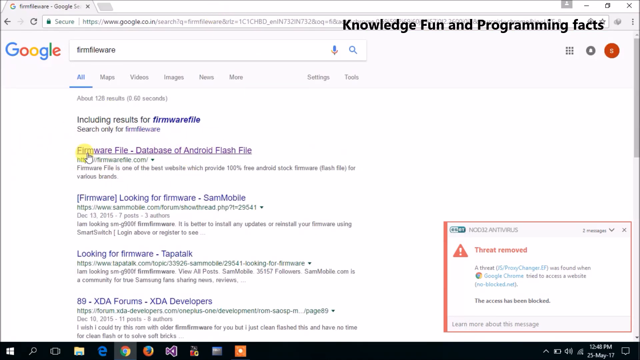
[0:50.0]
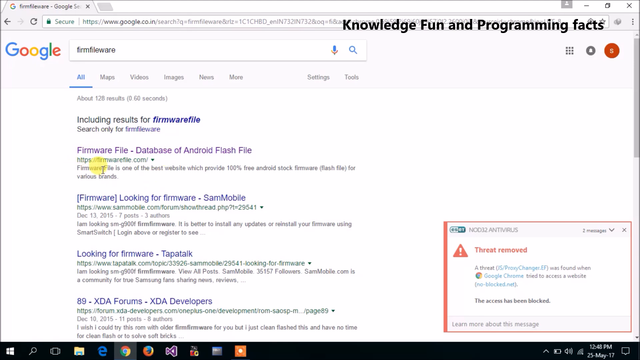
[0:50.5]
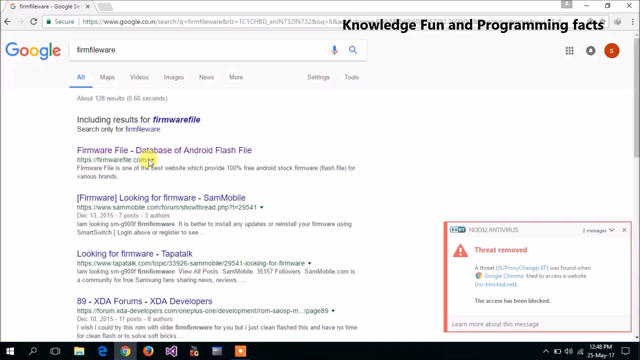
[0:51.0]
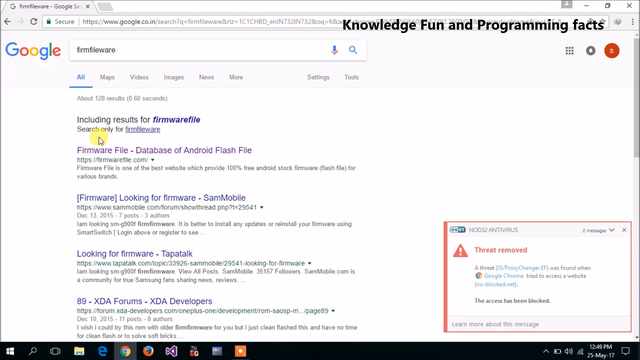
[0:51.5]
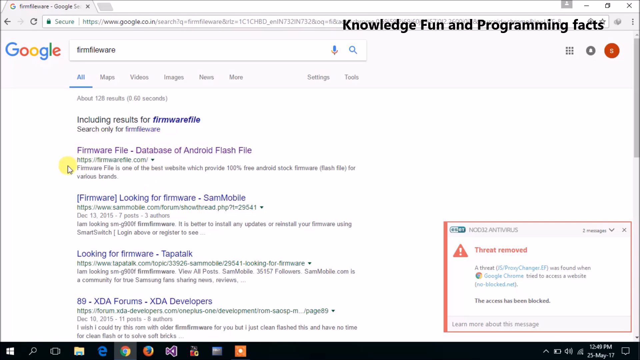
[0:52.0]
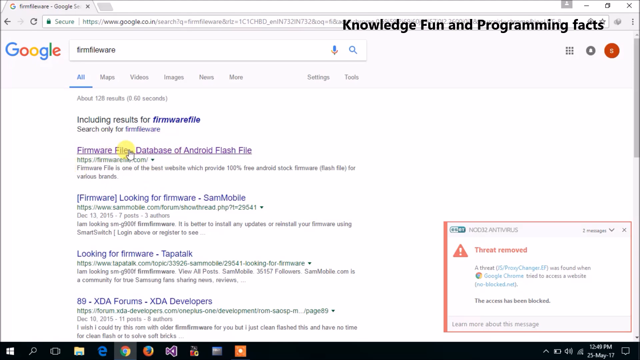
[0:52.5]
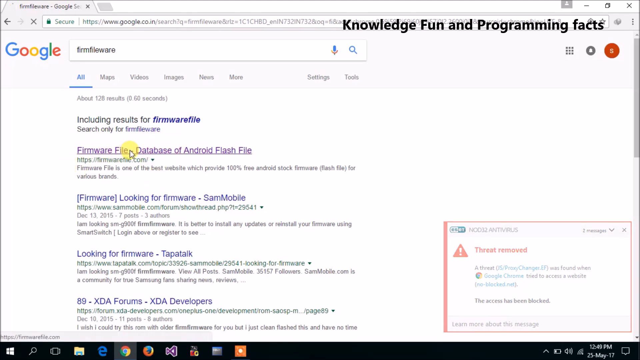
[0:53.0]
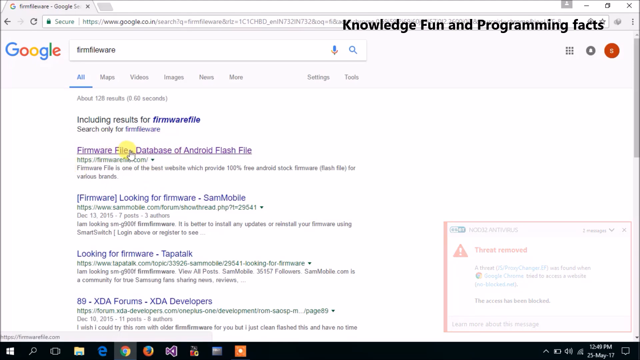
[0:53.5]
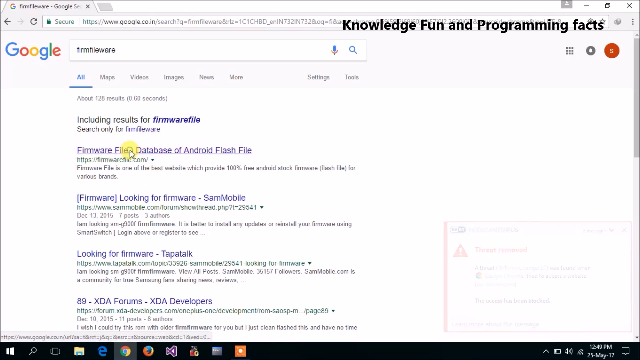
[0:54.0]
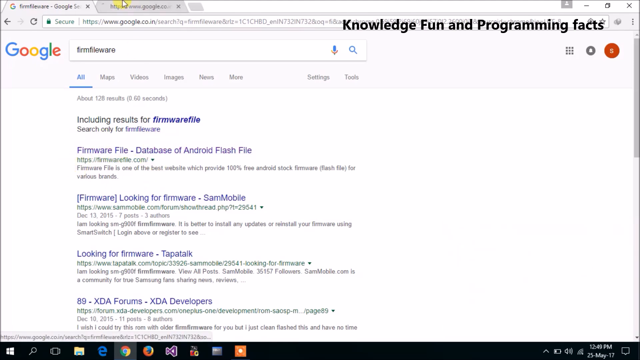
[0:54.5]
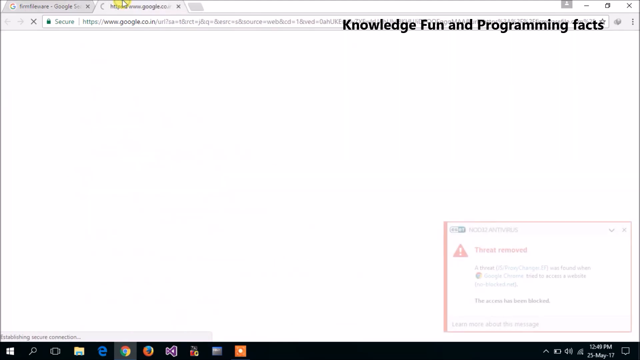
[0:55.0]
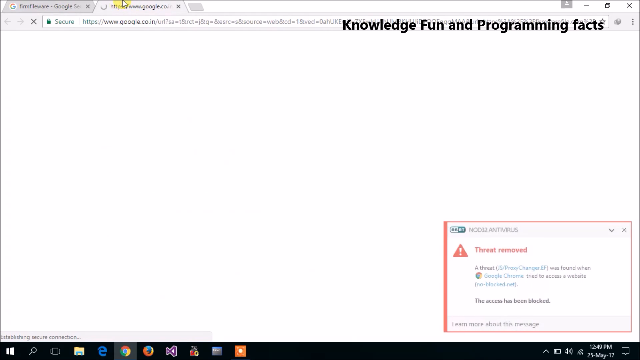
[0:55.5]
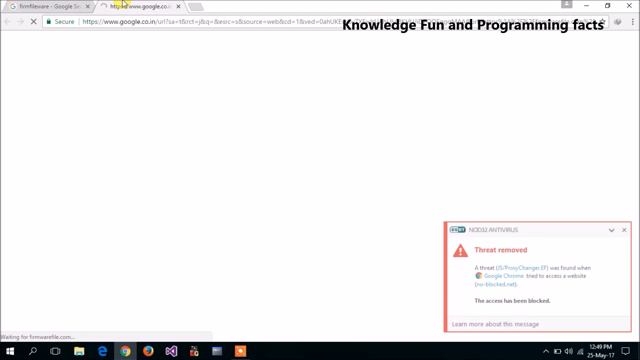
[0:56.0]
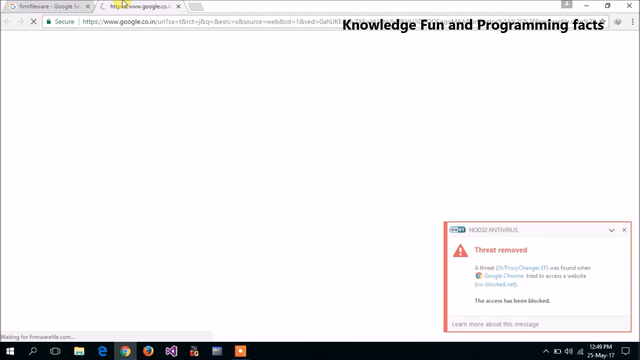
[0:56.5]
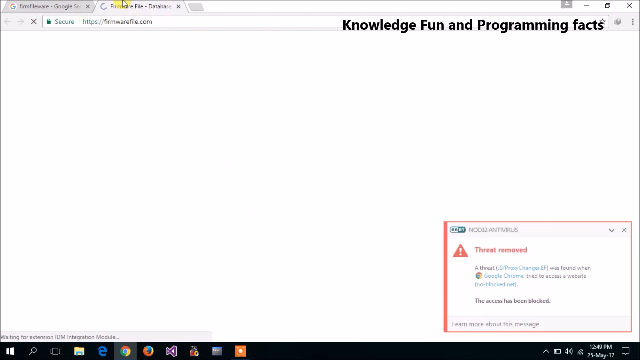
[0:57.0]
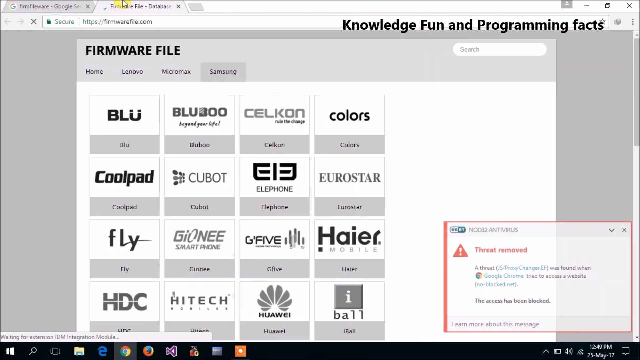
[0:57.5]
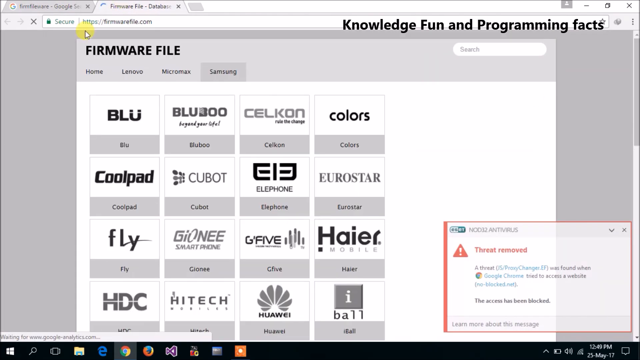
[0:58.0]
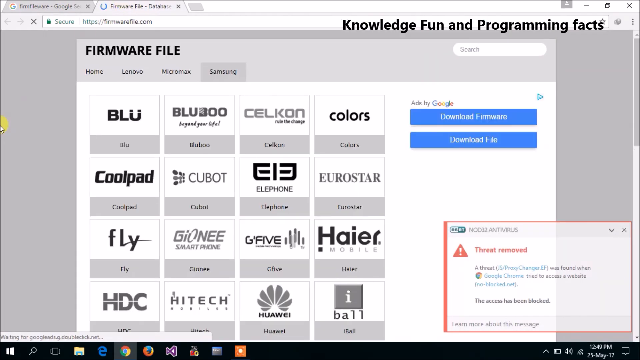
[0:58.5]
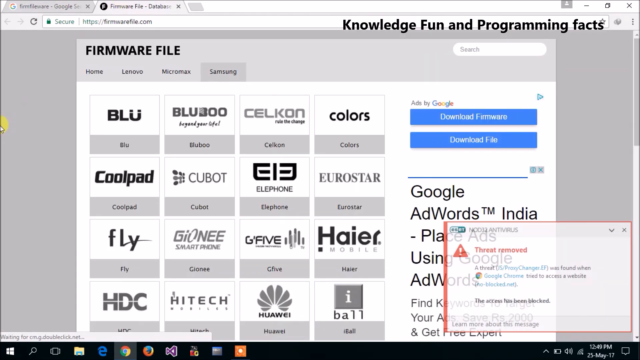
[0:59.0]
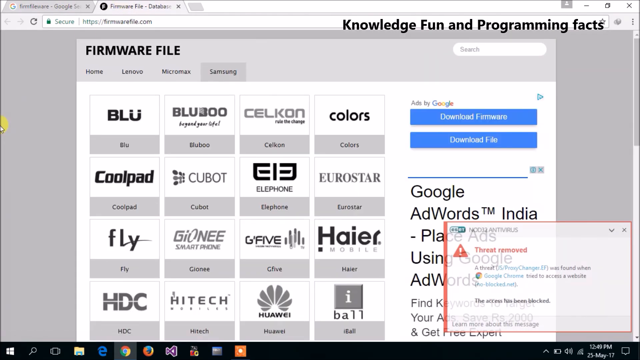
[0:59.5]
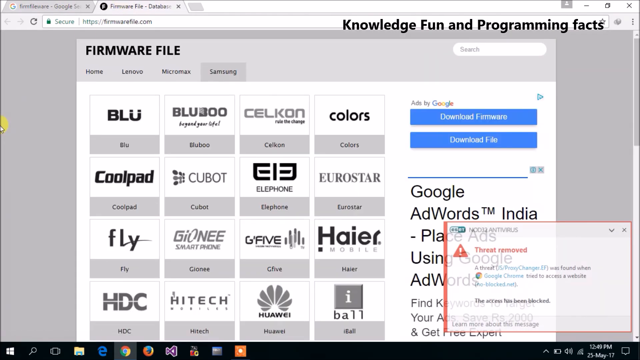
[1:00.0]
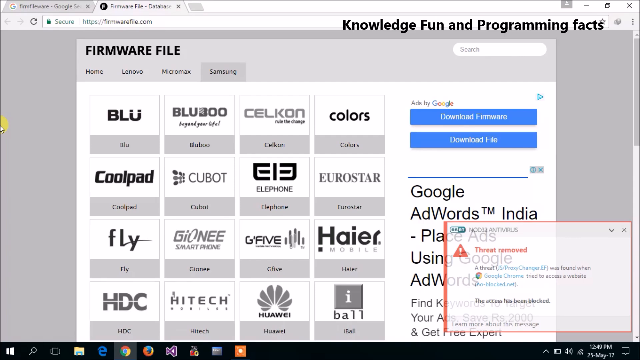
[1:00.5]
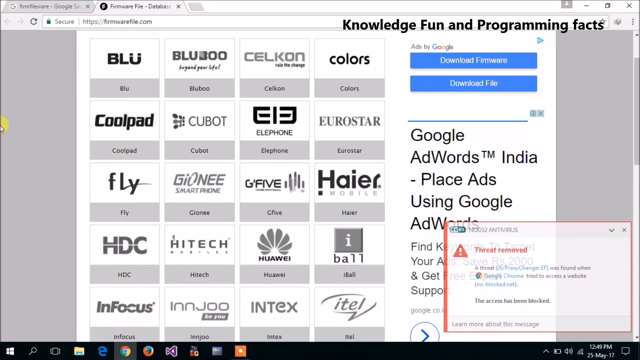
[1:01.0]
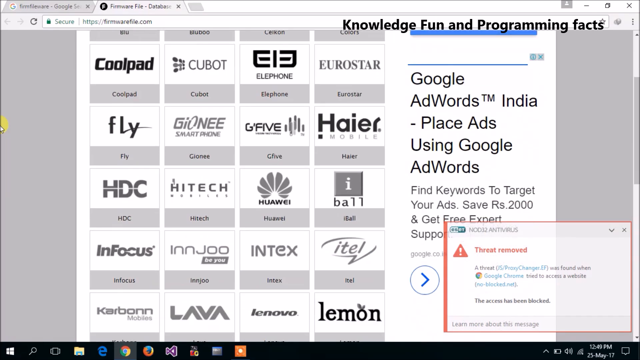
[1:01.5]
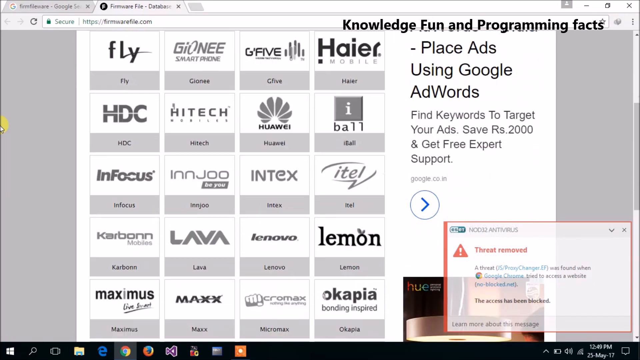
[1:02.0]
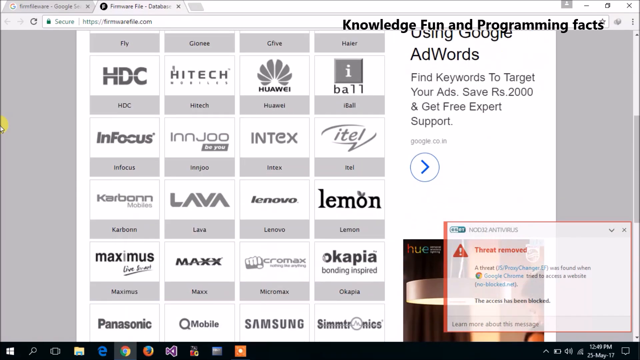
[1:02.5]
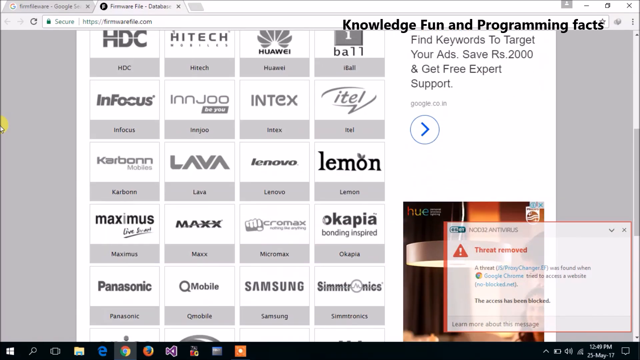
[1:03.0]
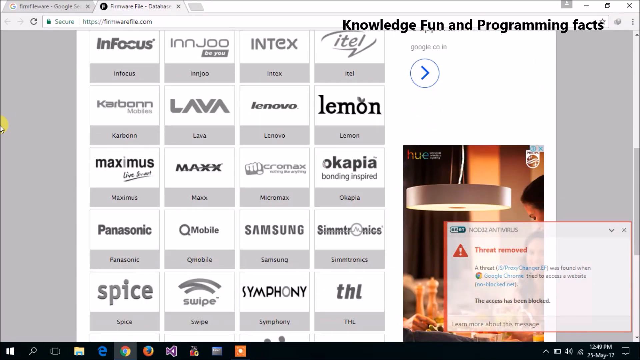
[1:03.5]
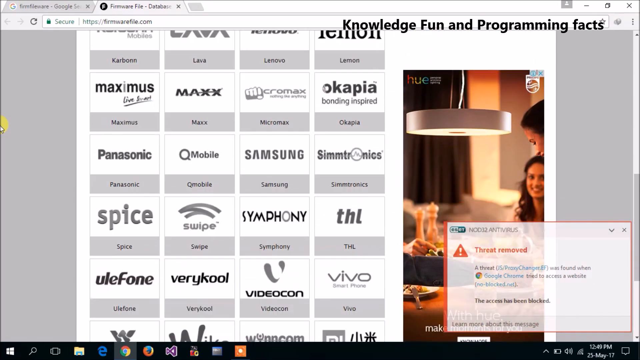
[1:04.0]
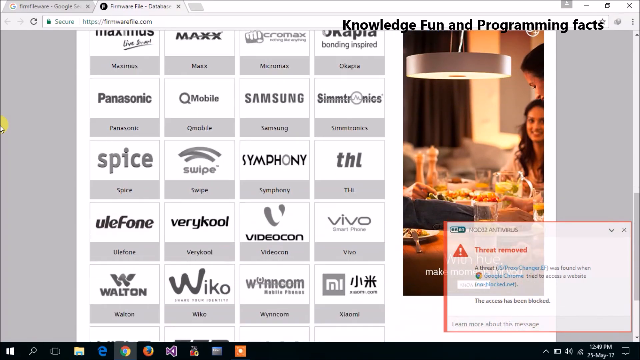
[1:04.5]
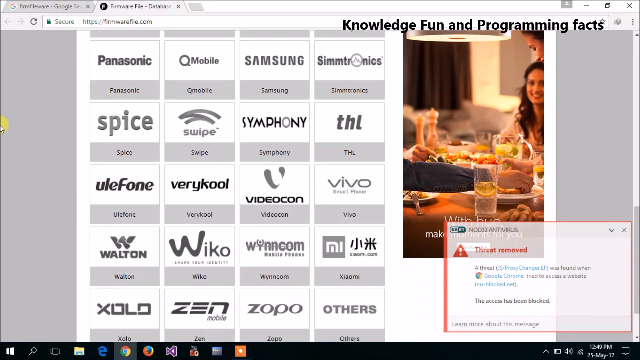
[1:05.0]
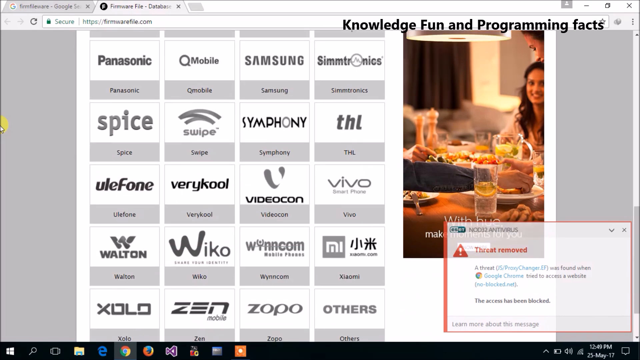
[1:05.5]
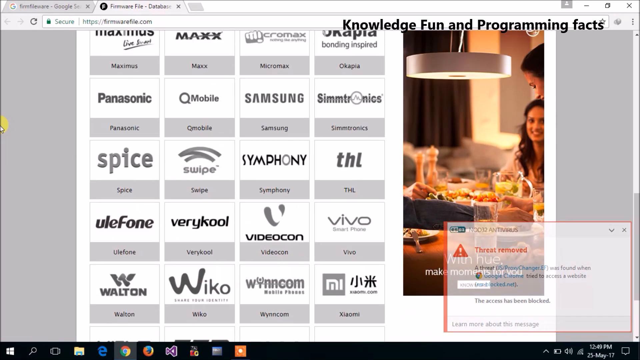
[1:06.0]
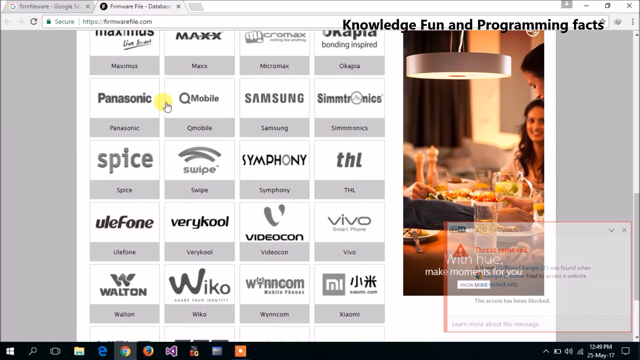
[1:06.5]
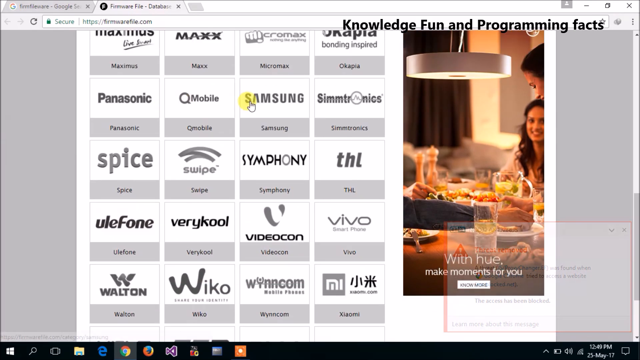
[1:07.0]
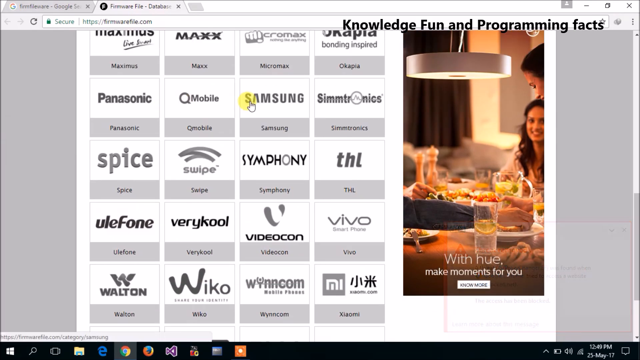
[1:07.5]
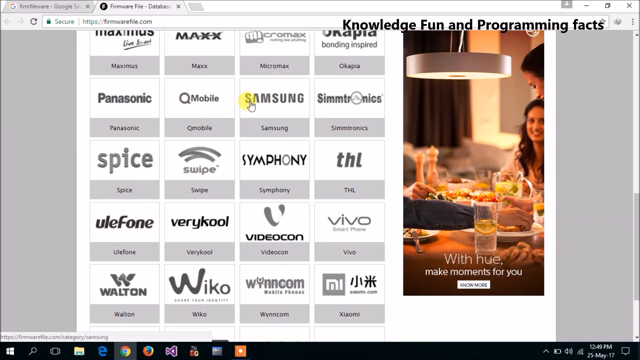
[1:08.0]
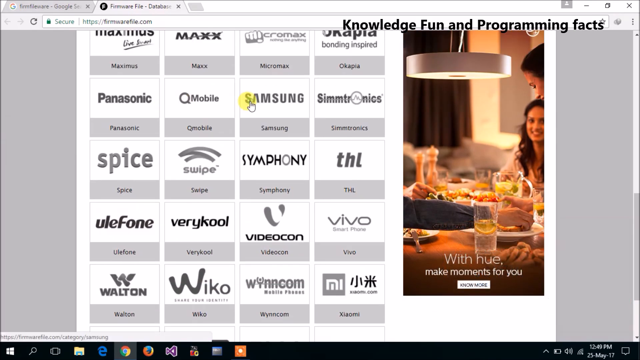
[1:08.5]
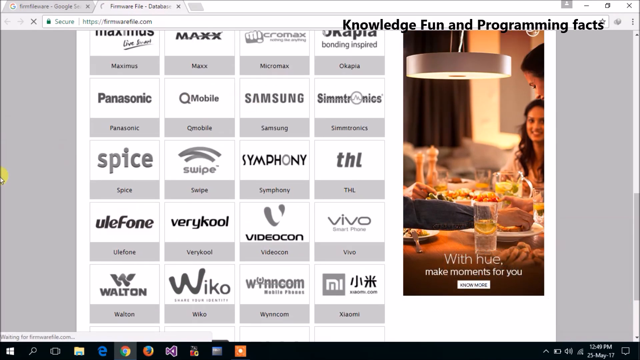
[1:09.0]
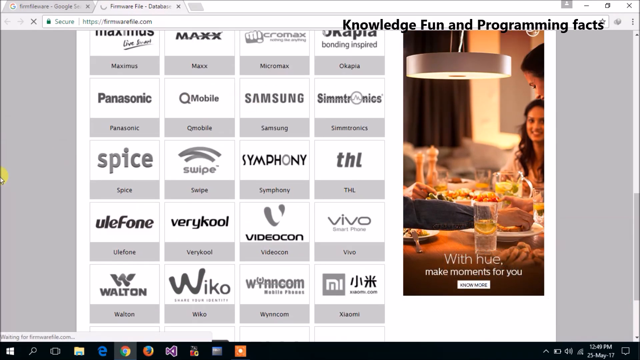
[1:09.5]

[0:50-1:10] A cursor with a yellow circle underneath it hovers around a page of Google search results. The word "firmwarefile", written as a single word, seems to have been typed into the Google search bar. In the top right corner, the text "Knowledge Fun and Programming Facts" continues to show. The user then appears to click something. In the bottom right corner of the screen, a message titled "Threat Removed" appears. A page then appears with the text "Firmware File" at the top. Below it are different sections of the page, including Home, Lenovo, Macromax and Samsung, and underneath these are logos of different companies, including Colors, Eurostar and Fly. Underneath the message in the bottom right corner is what looks like Google AdWords(TM) India, seemingly related to Google Ads. The user starts scrolling down the page and then hovers over the text Samsung.